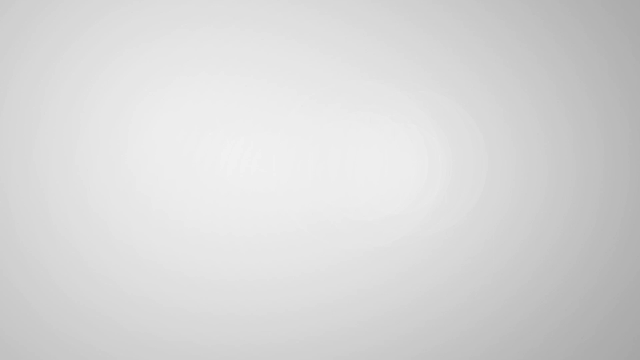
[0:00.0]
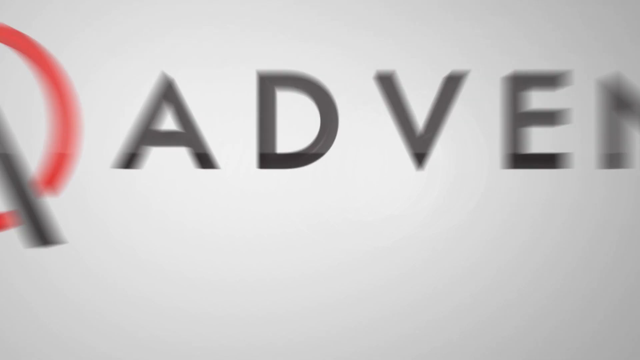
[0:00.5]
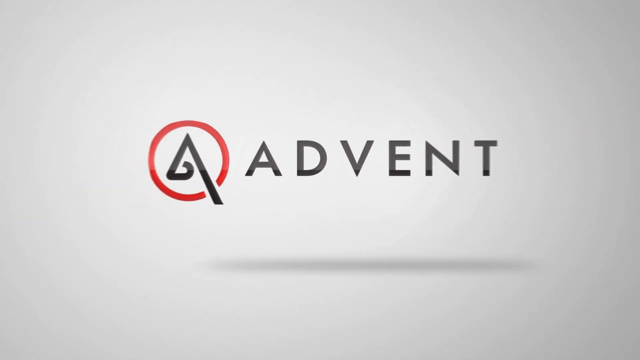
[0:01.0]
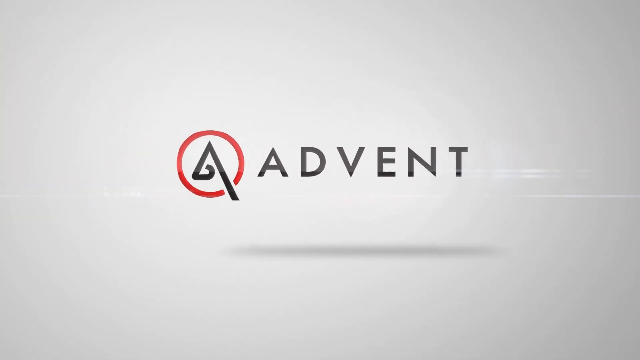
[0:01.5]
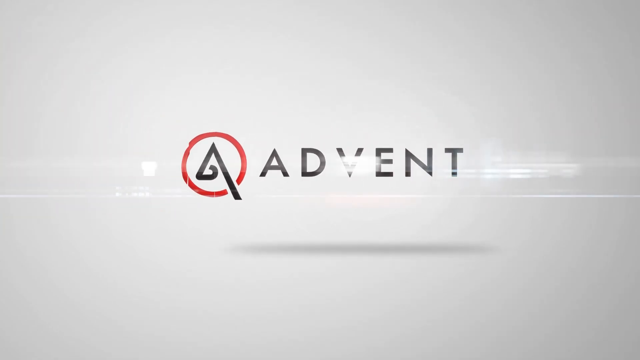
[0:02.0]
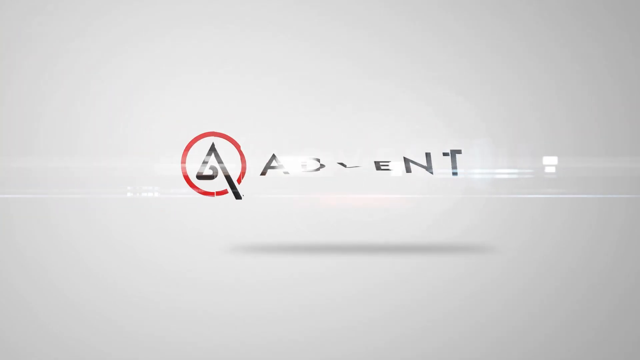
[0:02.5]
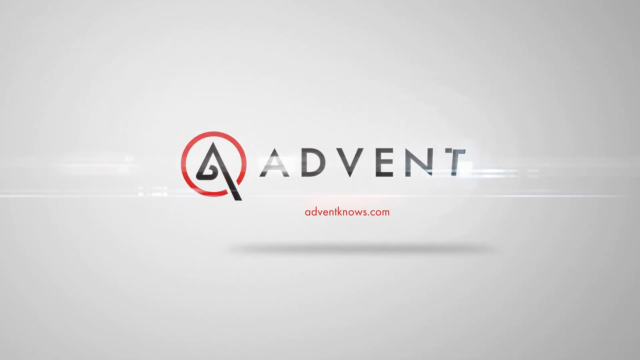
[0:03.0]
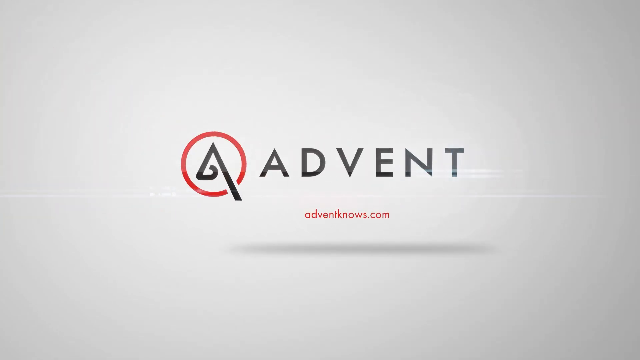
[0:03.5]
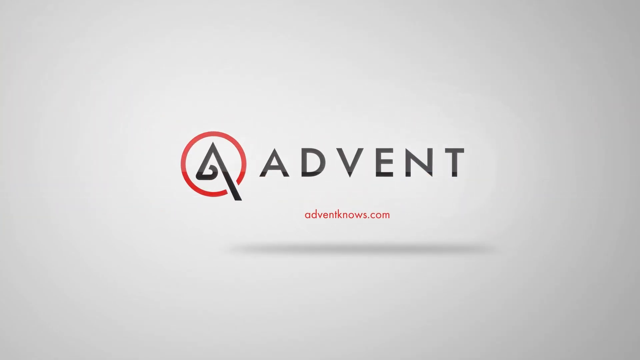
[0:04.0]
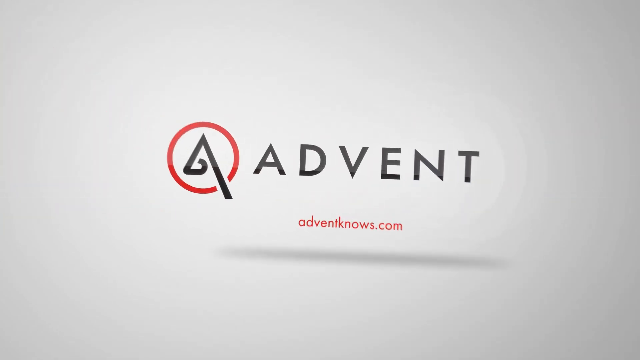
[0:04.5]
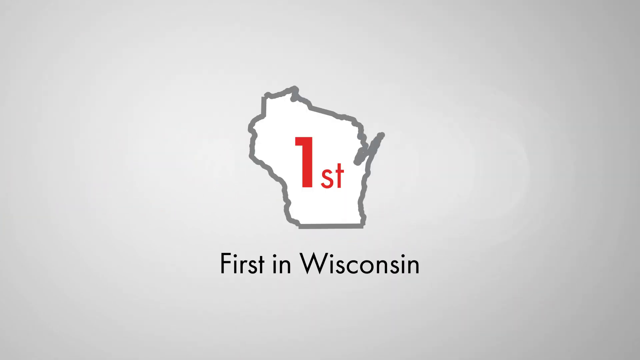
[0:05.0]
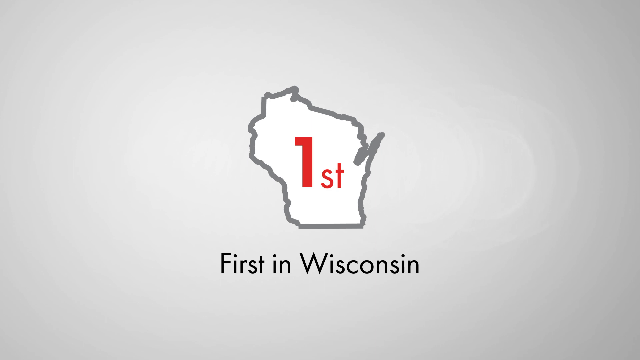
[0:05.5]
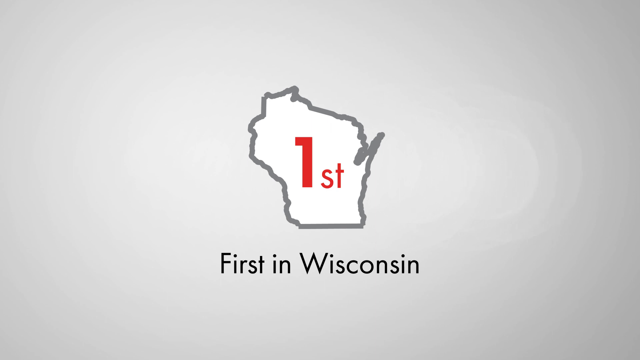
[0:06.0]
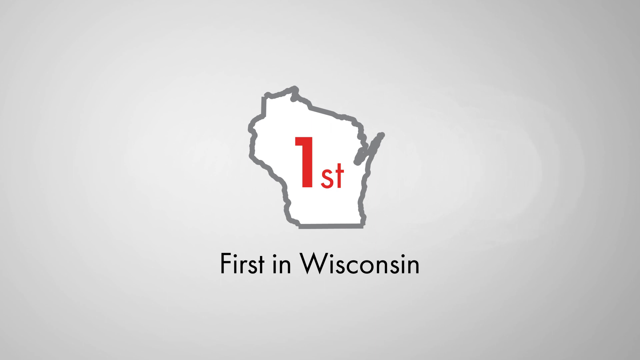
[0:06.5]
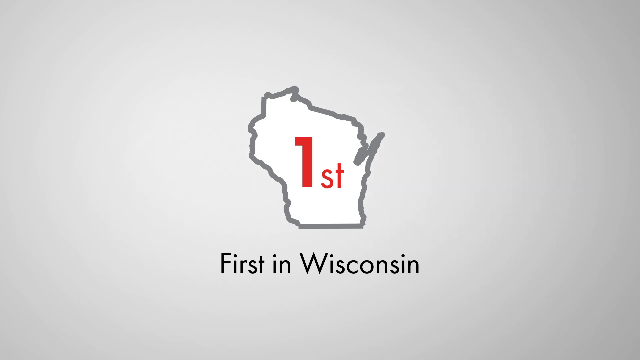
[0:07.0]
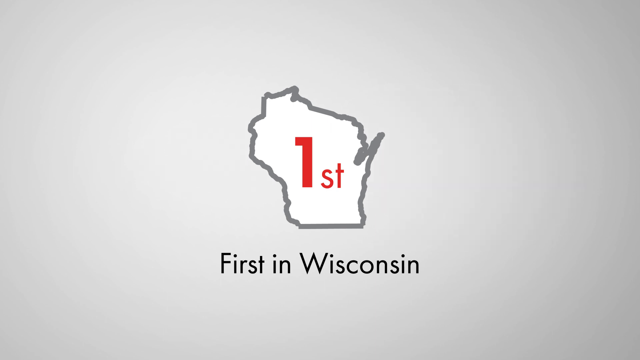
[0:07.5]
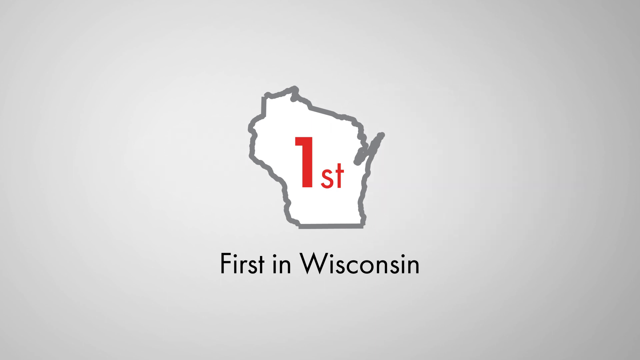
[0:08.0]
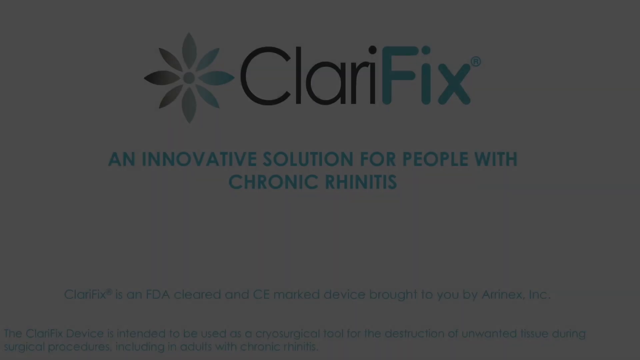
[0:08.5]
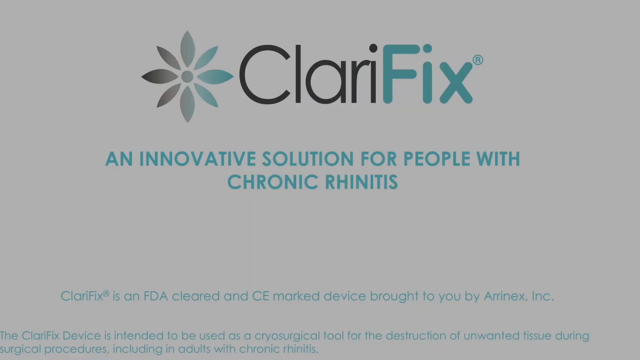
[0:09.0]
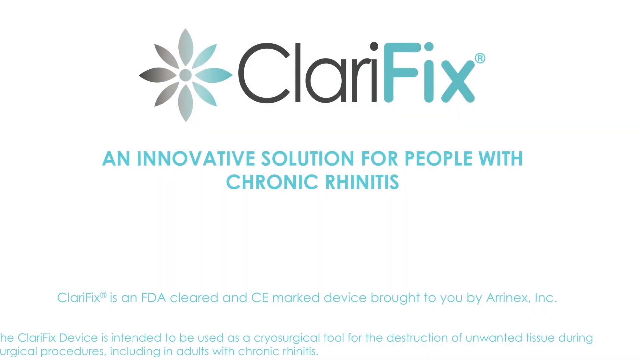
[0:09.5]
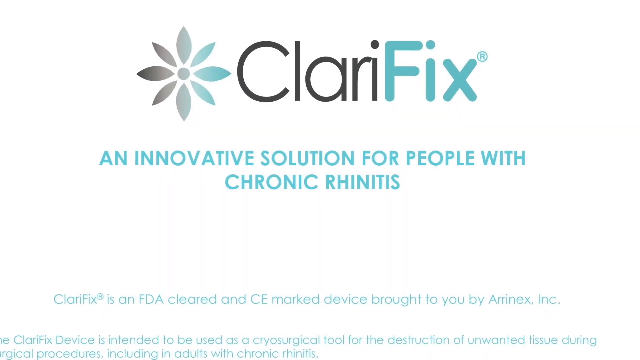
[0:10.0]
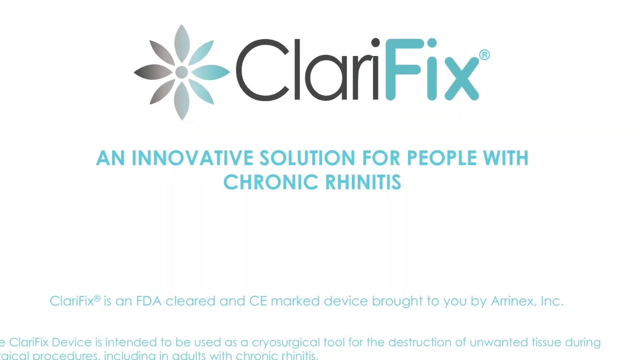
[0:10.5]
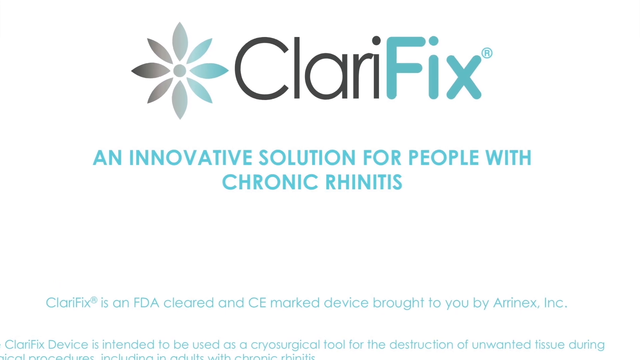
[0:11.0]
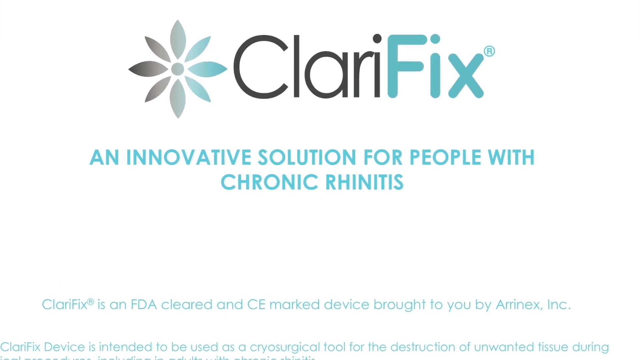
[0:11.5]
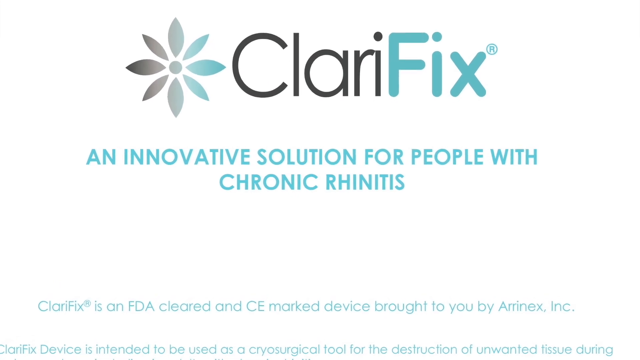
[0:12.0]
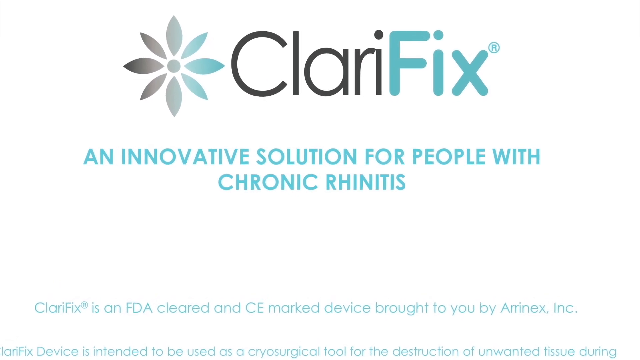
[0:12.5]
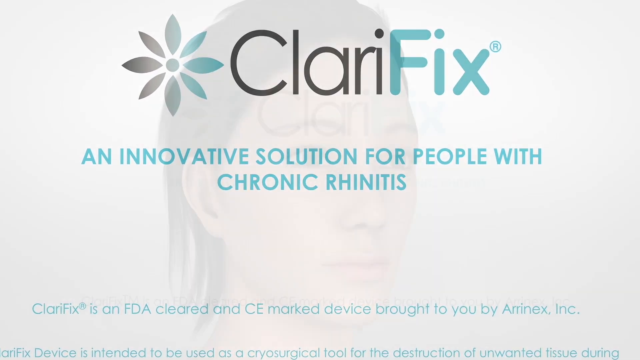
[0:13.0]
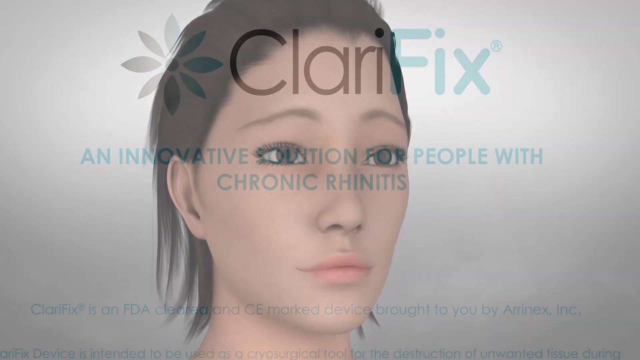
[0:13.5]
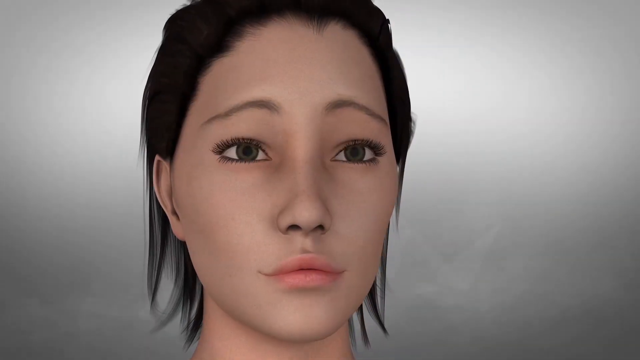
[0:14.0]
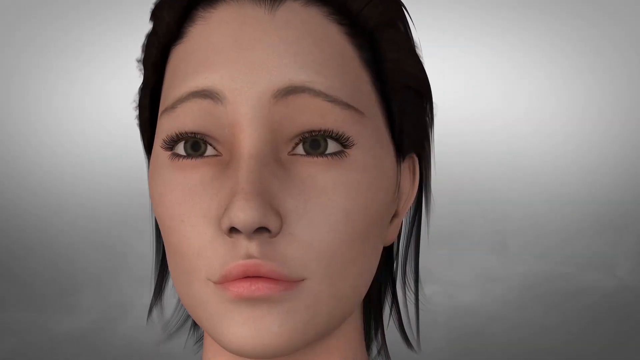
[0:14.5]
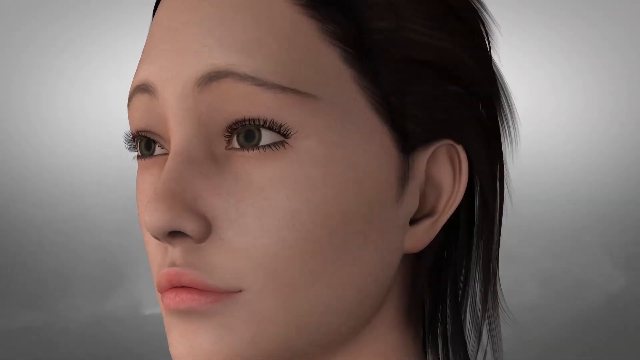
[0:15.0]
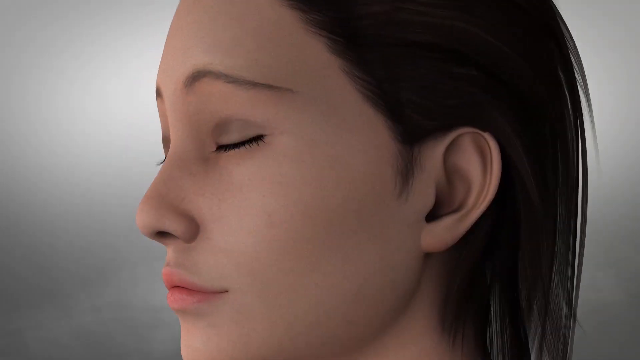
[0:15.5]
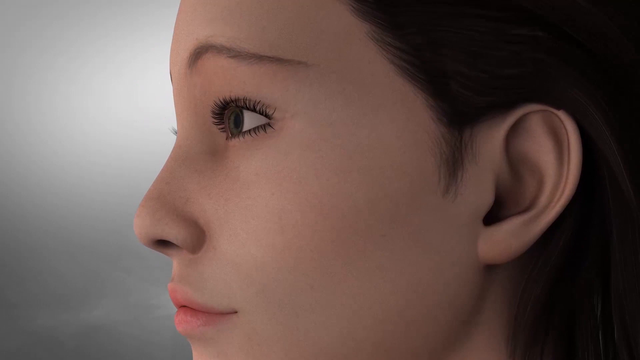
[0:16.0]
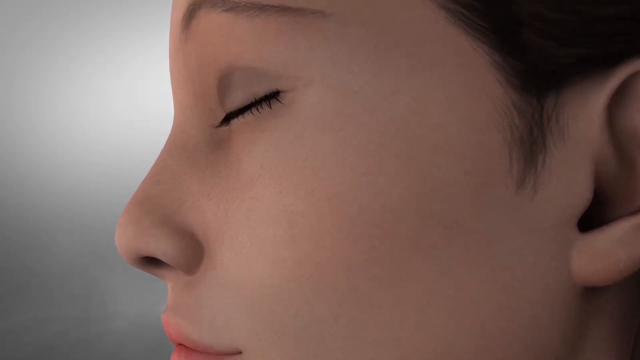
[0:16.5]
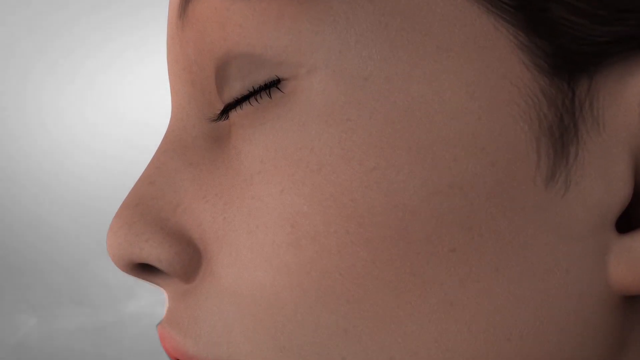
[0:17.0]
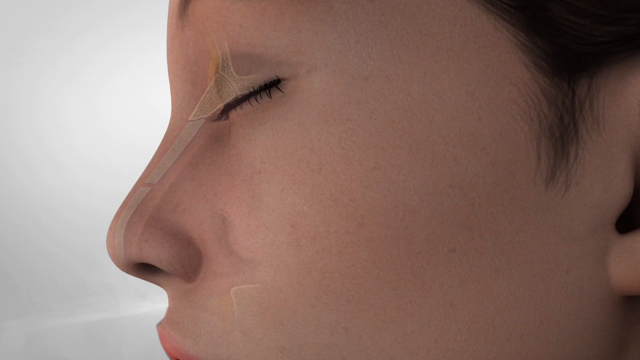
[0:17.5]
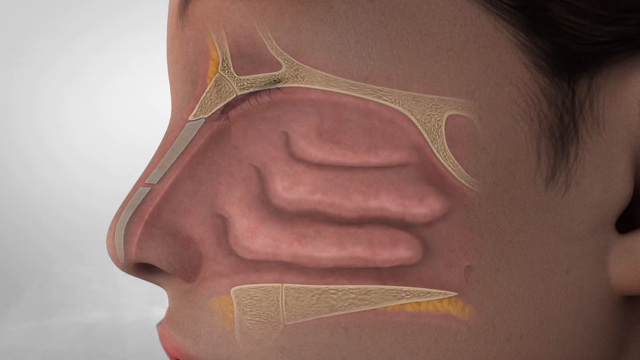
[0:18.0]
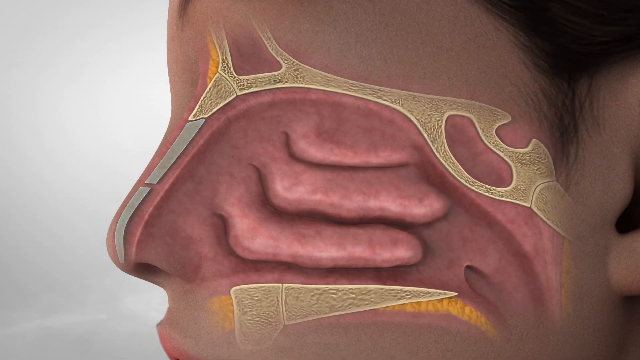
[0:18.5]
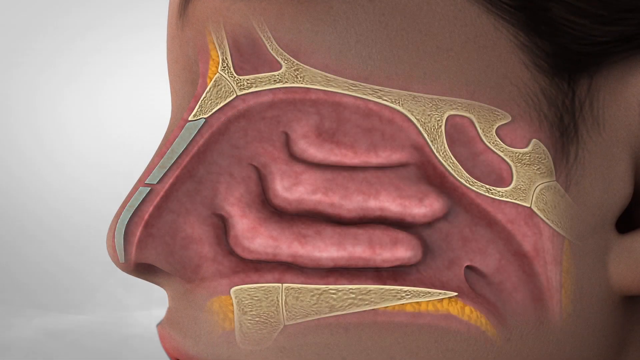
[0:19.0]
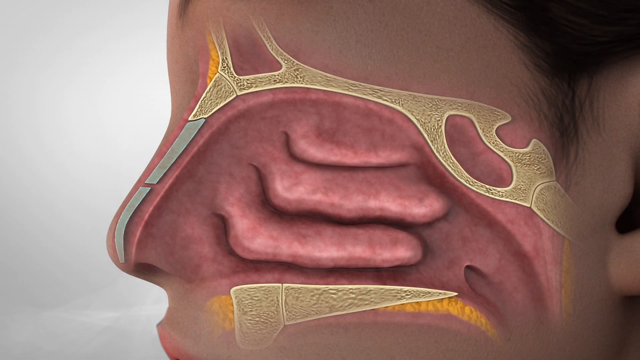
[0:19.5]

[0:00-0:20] A logo comes in on the page: a red circle with a black symbol in it that looks like an A, except that the left line of the A is much shorter and curls inward. Next to it, black text says "Advent." The logo kind of rotates, and then the text "adventnose.com" appears underneath in red. The view zooms into that, and the gray outline of Wisconsin appears, filled in with white, with red text showing "first" in numerals and, underneath it in black, "first in Wisconsin." The picture then moves to a new page with a flower in a gradient of gray and teal. Black text says "Clari" and teal text says "Fix," and underneath in teal it reads "an innovative solution for people with chronic rhinitis." Tiny letters at the bottom say "Clarifix is an FDA cleared and CE marked device brought to you by Aminex Inc." The view zooms in on this a little, and the page switches to a CGI woman on a gray background. She has light skin, dark almond eyes, thin eyebrows and thin black hair. She blinks her eyes four times, then closes her eyes as she turns around, showing the side profile of her face. As she closes her eyes, the inside of her face appears on the side of her face.